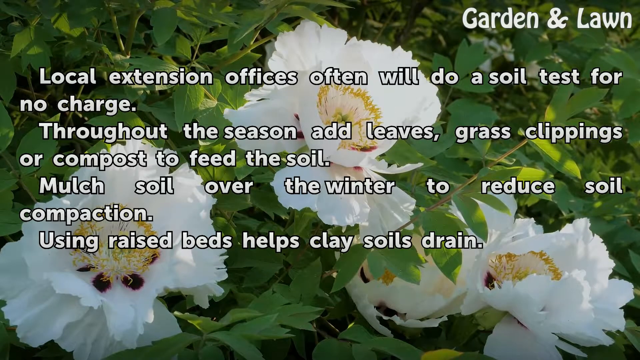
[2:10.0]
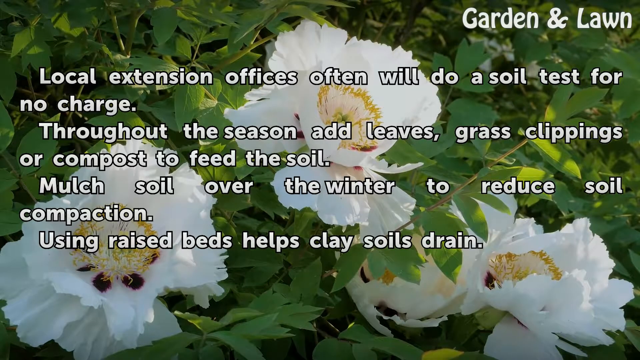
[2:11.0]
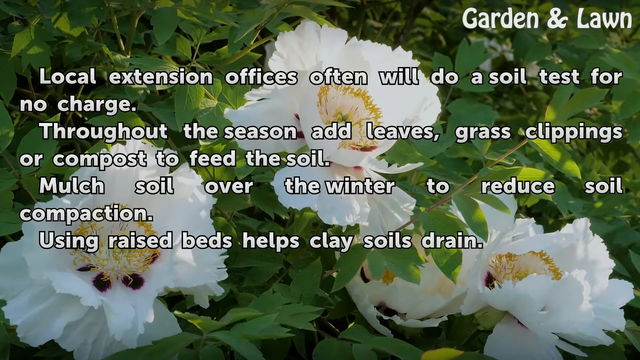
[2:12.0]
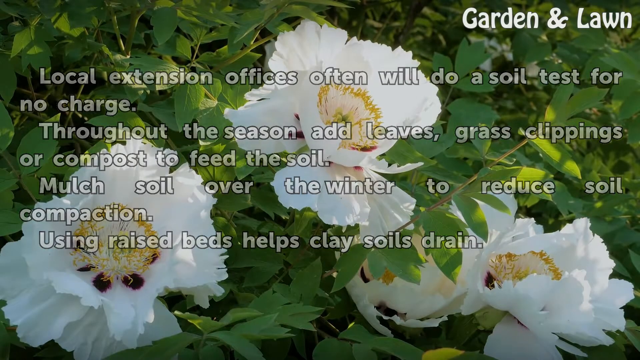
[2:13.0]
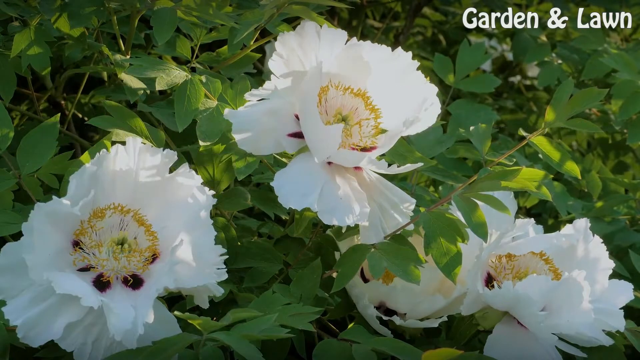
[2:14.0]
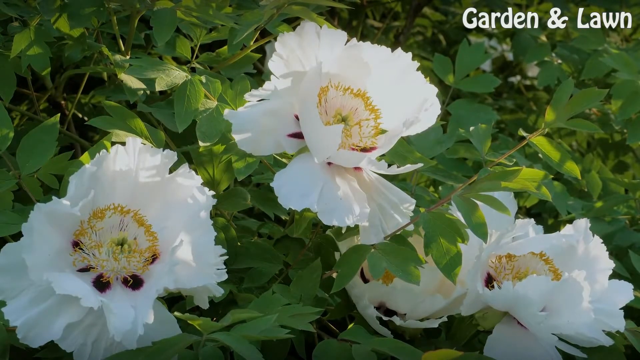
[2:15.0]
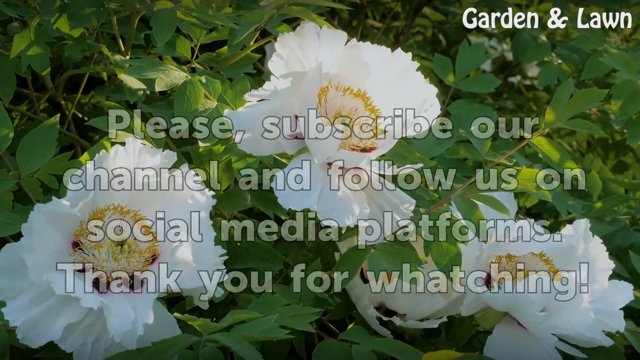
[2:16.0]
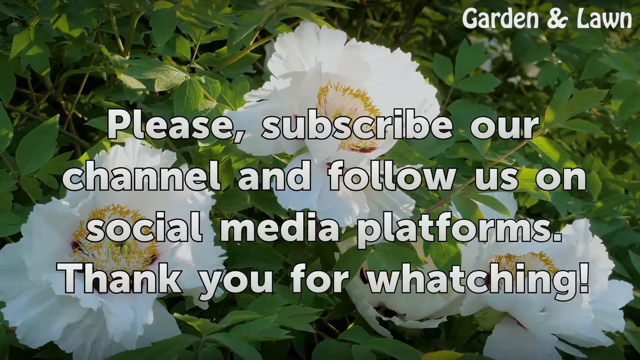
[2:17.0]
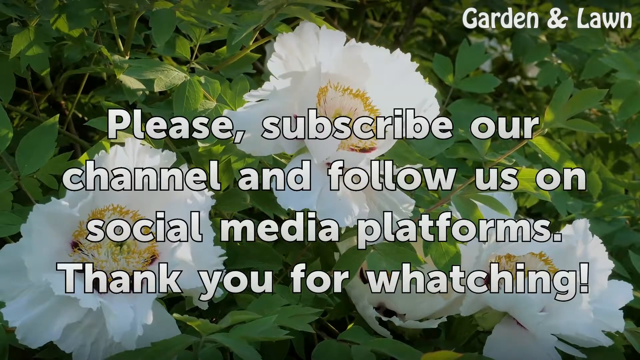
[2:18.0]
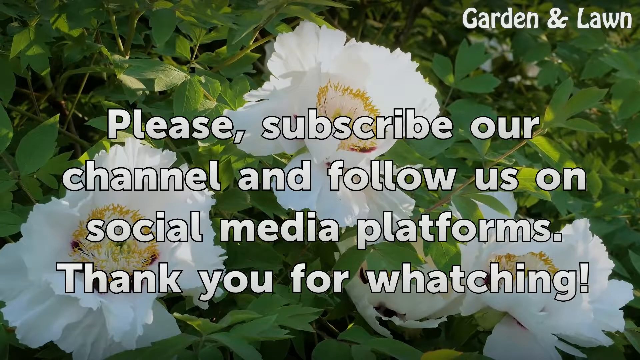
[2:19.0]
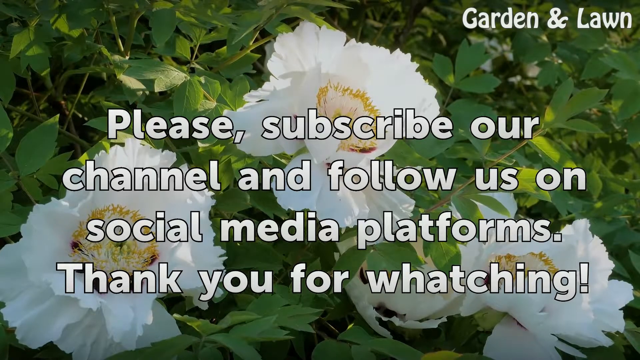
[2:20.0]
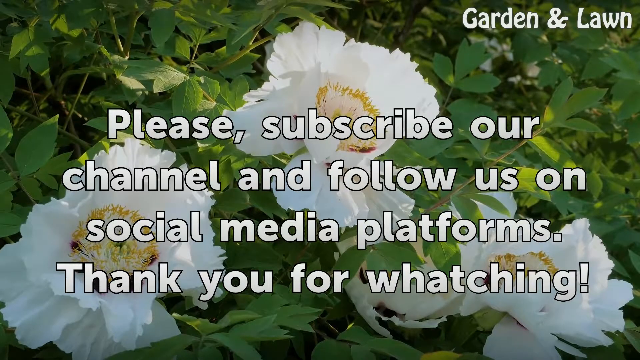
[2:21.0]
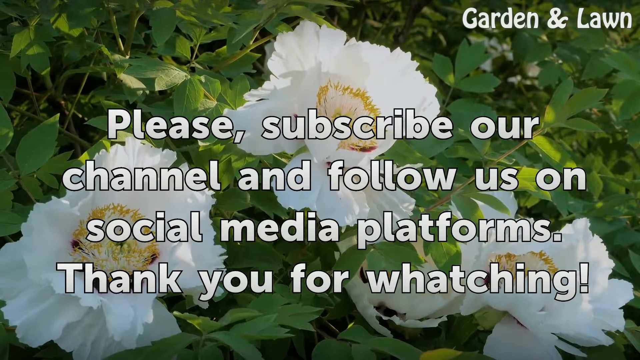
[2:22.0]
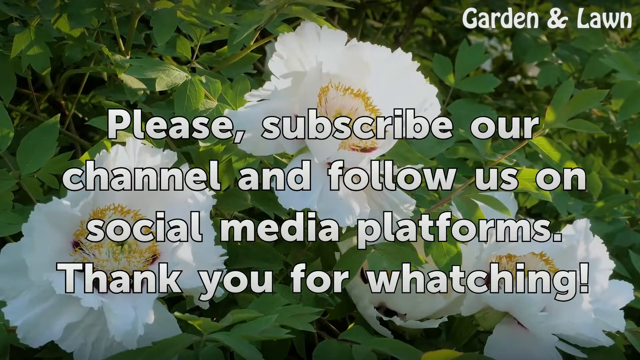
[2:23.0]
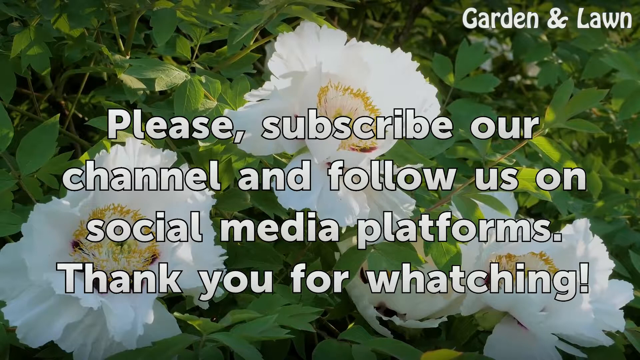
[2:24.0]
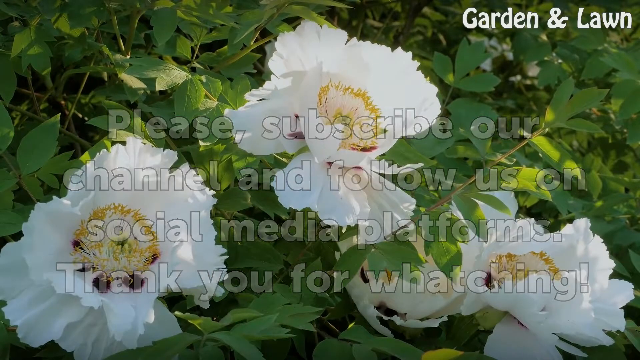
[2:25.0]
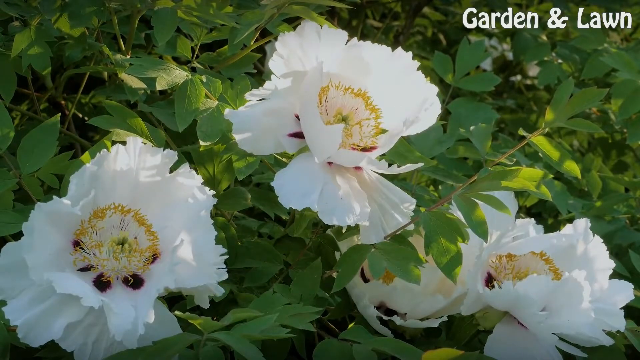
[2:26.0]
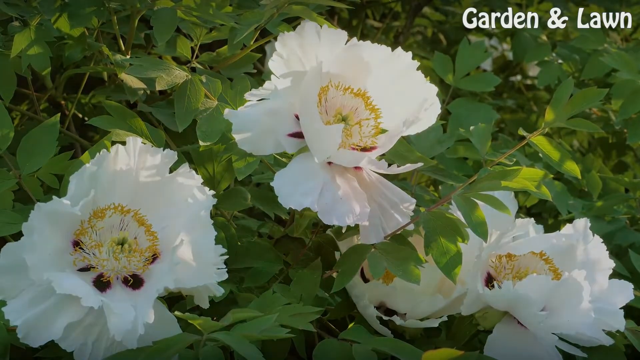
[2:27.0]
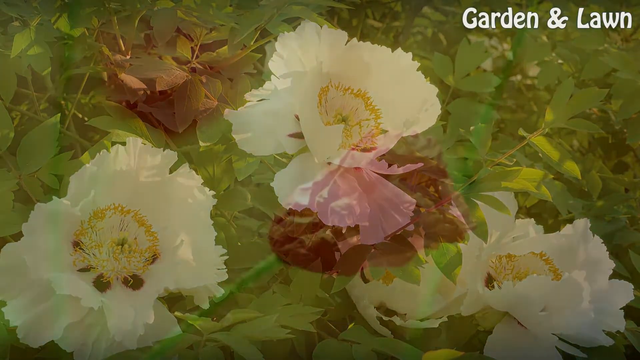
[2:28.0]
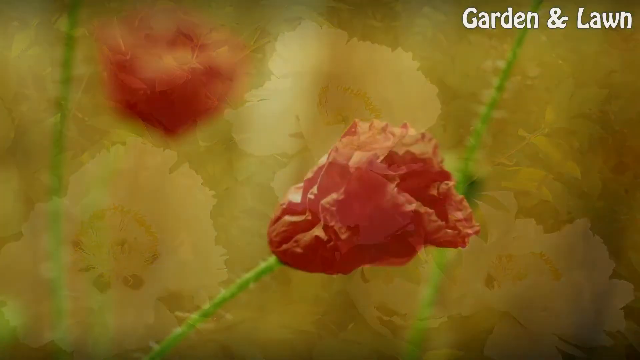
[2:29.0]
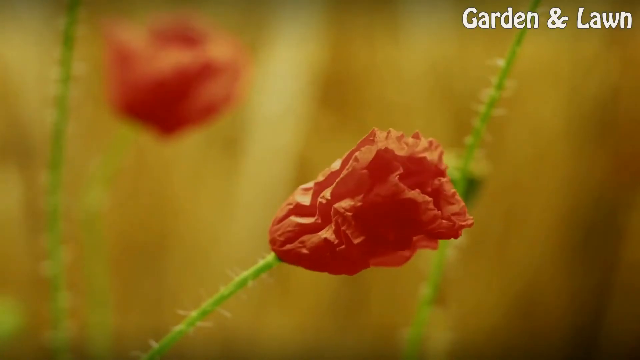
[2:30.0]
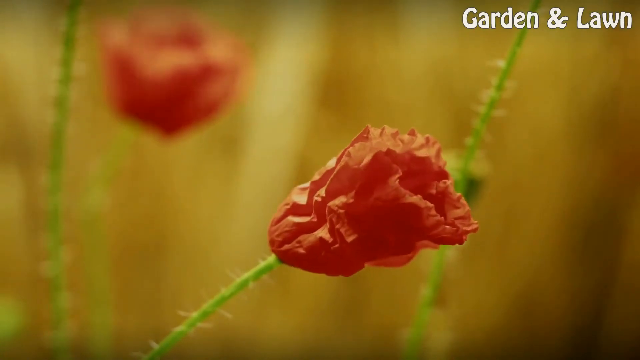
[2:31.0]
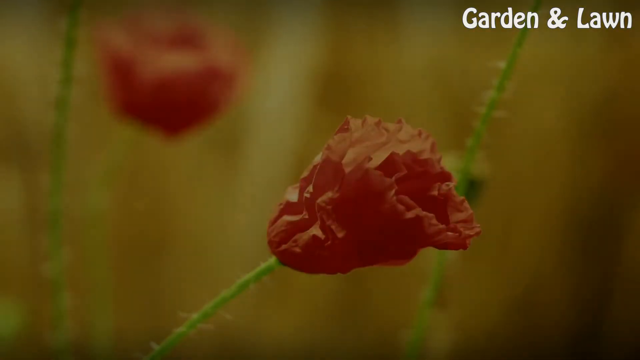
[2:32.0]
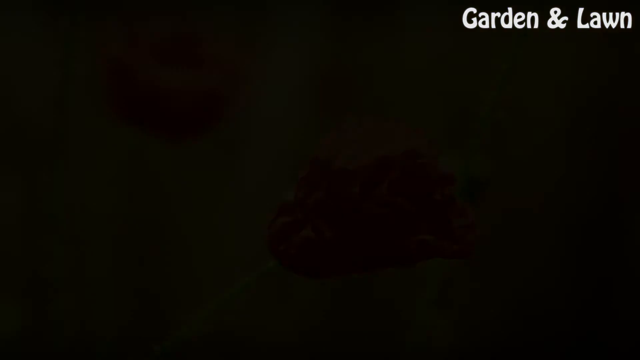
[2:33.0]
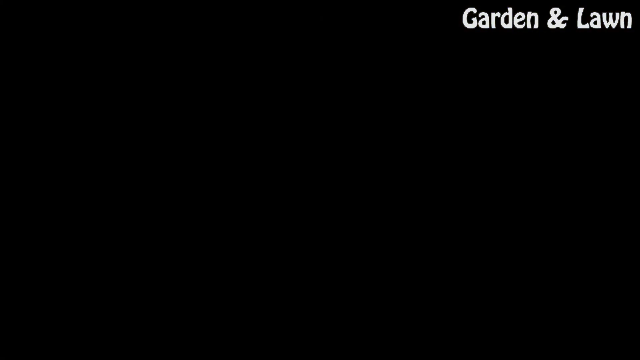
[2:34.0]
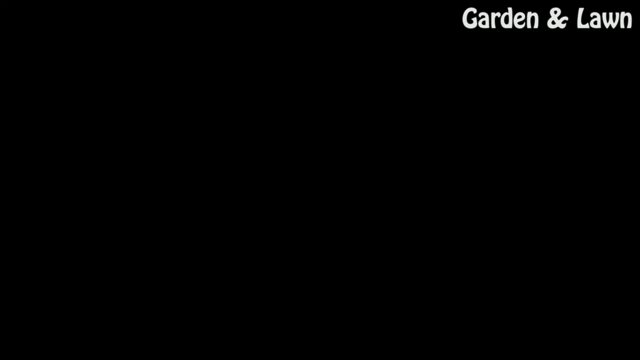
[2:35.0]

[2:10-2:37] The background shows several white flowers growing in or through a green bush, with the text about local extension offices doing soil tests and advice for the winter months. The text gently fades from view and new text fades in: "please subscribe our channel and follow us on social media platforms. Thank you for watching." That text fades, and a moving picture emerges: a time-lapse of a plant opening out its petals and forming into a flower. The flower has red petals that look almost like crepe paper and is on a green stem, with a couple of green stems in the background; the screen is centred on this flower opening up. The screen then gently fades to black, leaving only the "garden and lawn" text in the very top right-hand corner.